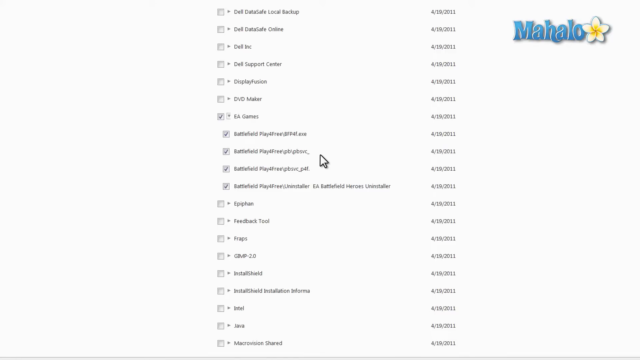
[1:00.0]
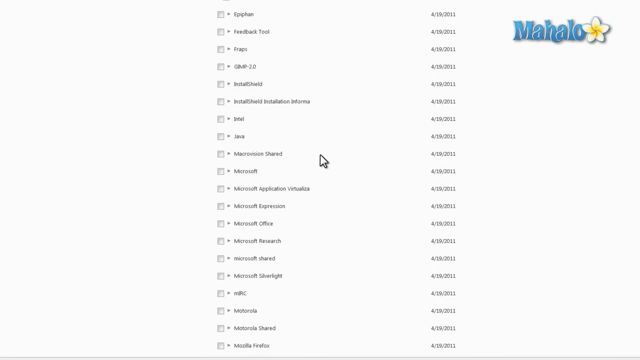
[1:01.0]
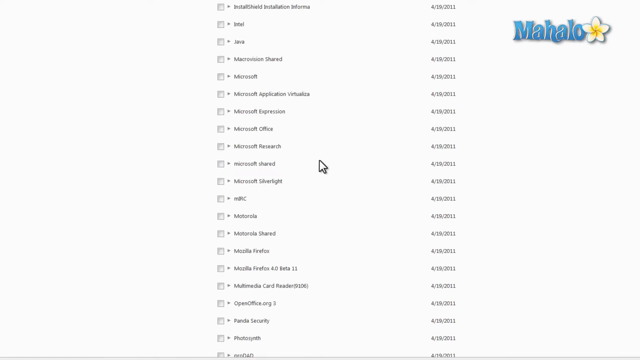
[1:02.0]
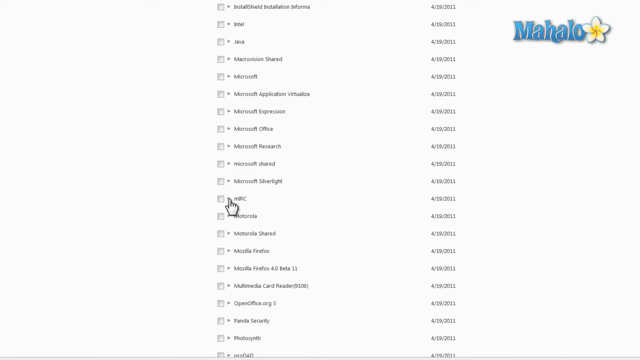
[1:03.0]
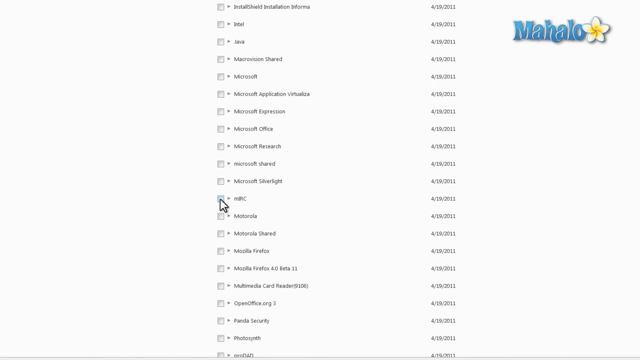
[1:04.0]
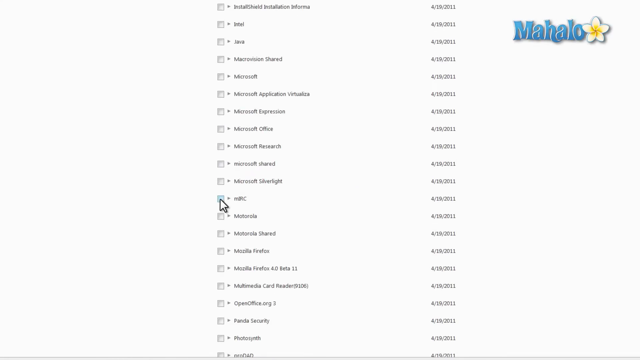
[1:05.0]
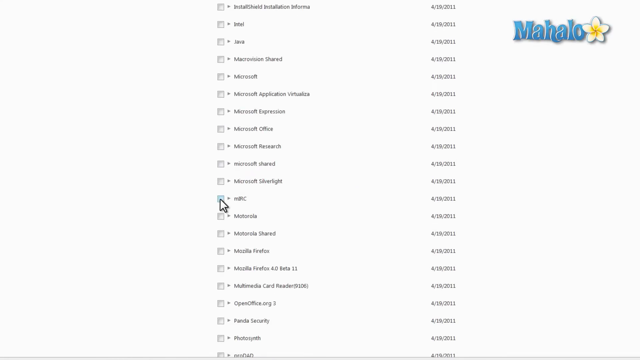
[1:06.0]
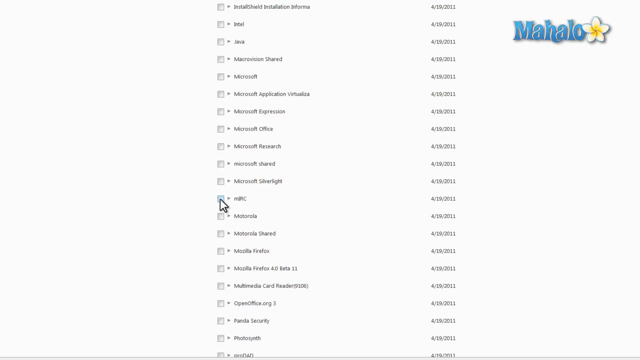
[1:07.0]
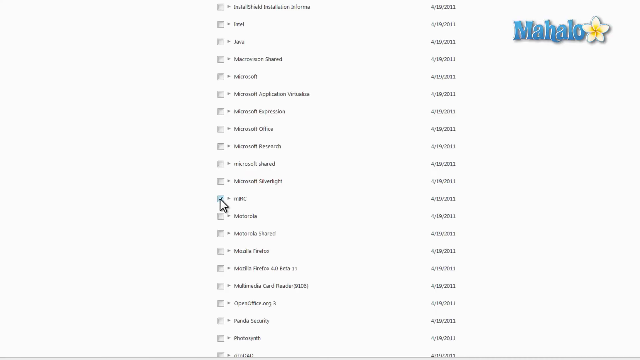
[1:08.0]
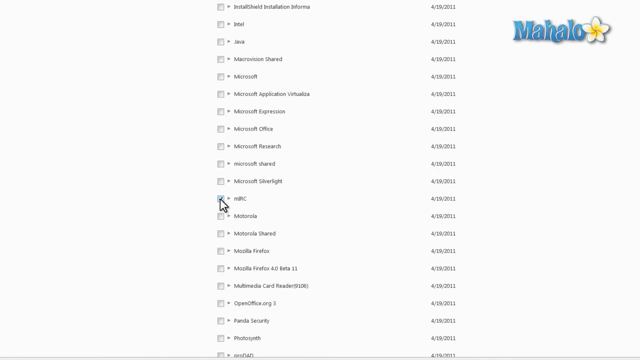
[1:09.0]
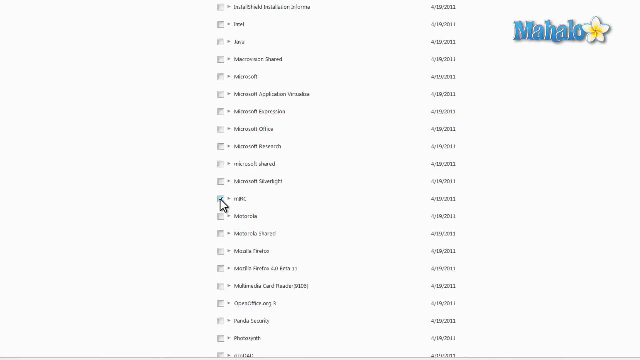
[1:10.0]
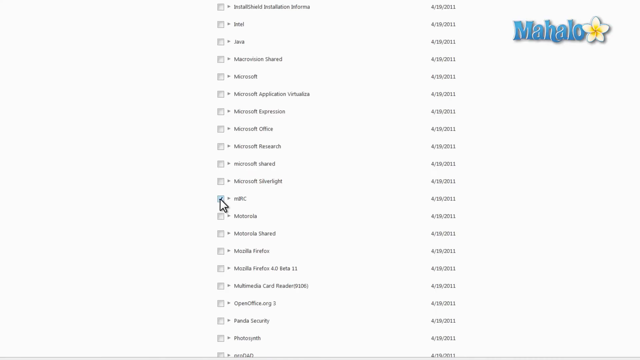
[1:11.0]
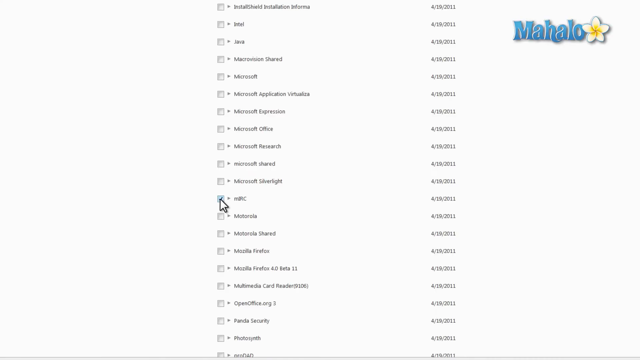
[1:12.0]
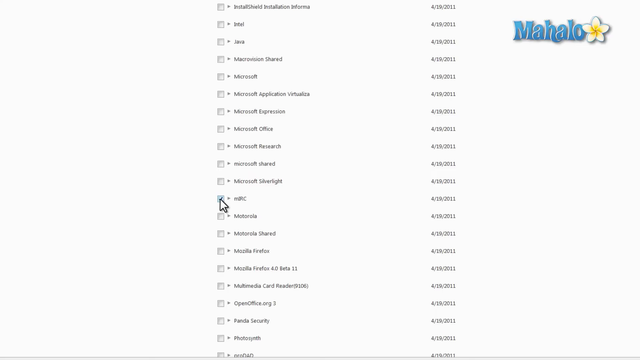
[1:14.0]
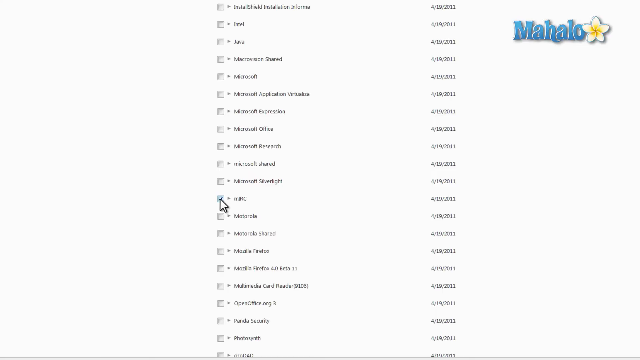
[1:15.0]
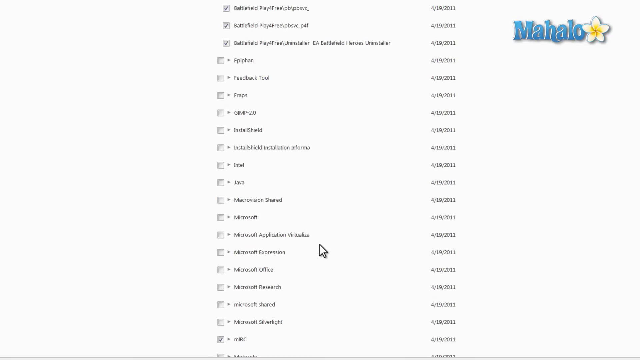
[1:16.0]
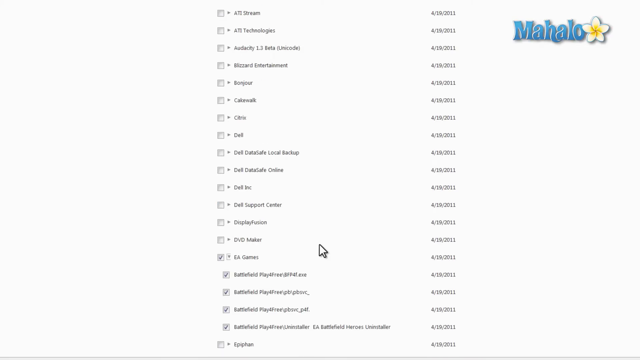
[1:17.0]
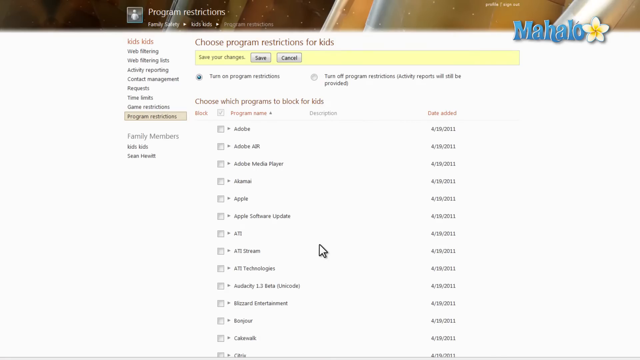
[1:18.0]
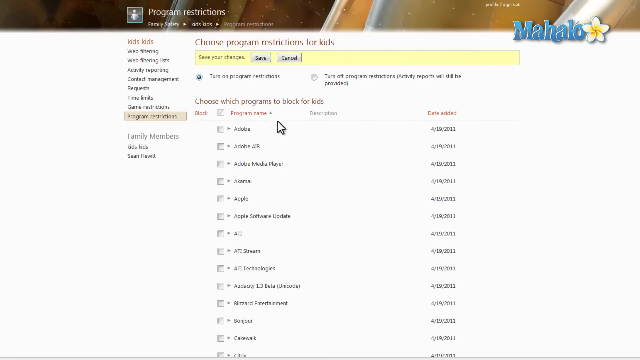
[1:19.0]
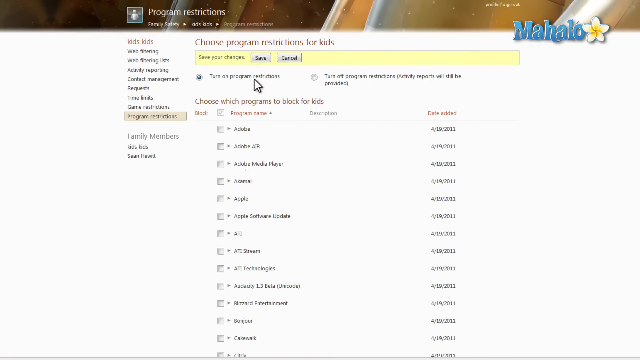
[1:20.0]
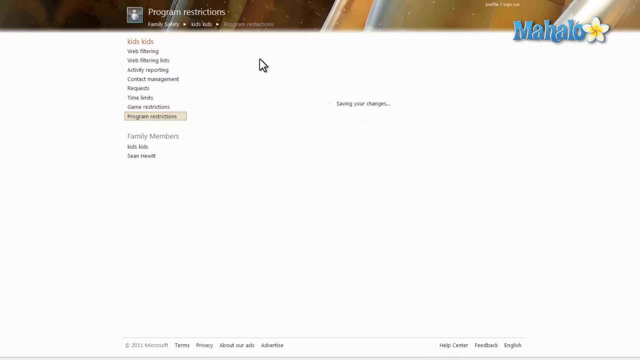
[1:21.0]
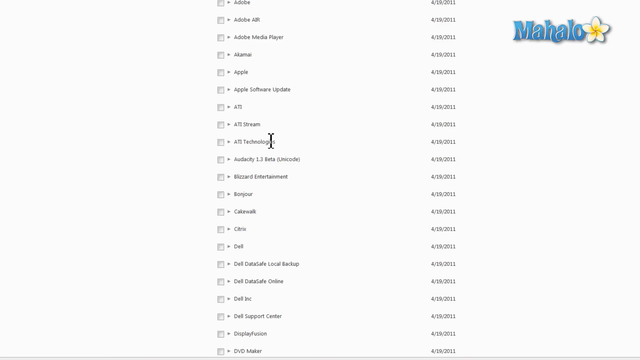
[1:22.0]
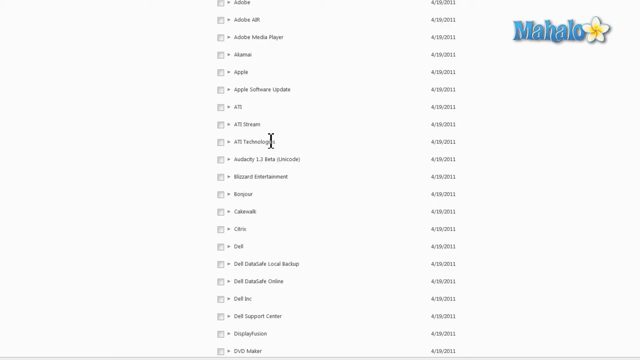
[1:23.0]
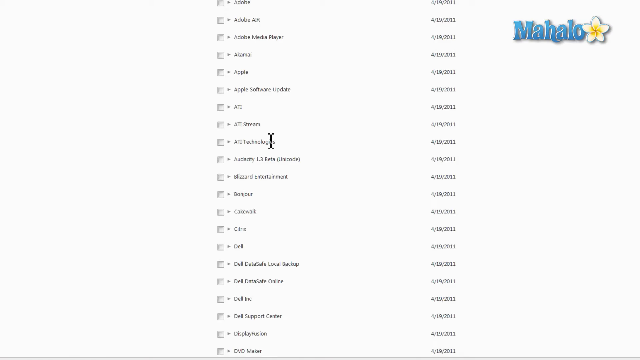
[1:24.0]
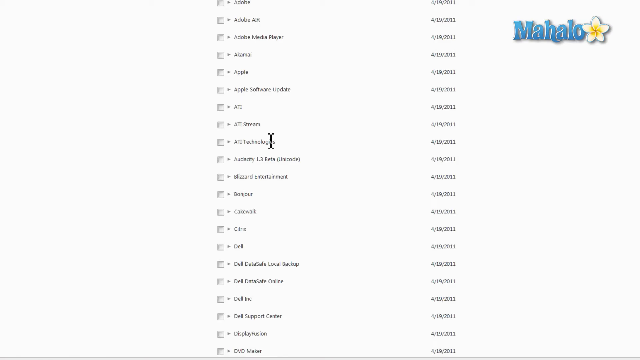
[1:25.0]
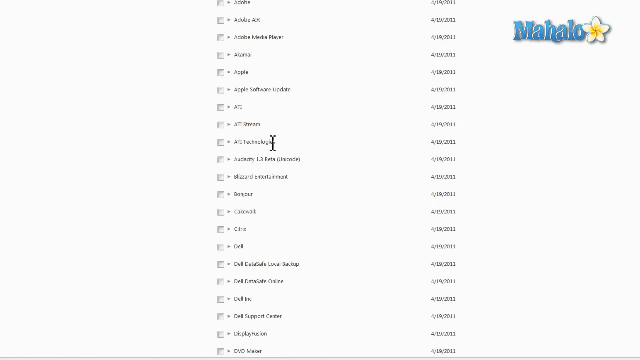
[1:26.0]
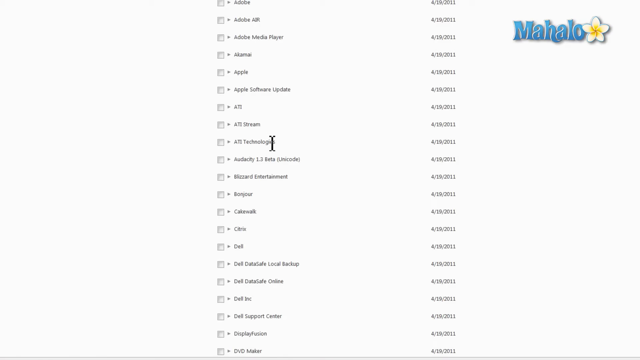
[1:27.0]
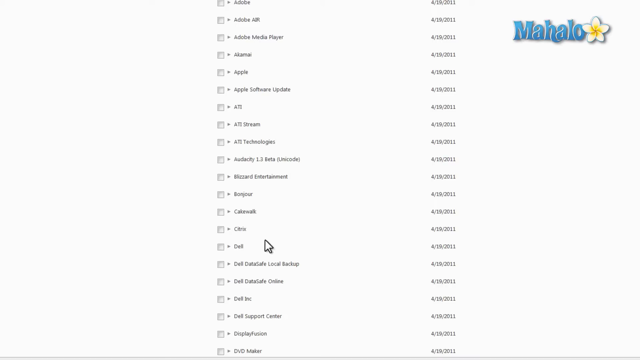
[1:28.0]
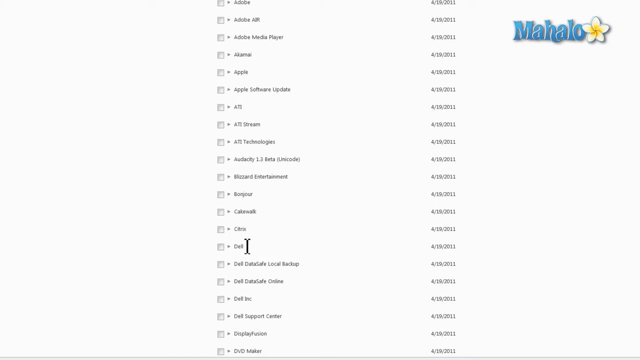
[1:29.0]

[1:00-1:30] After EA games is selected, the view goes down to an entry called AMC. It looks like a lowercase m followed by a capital M and C, though the middle letter is a bit blurry; since Microsoft is above it and Motor Play is after it, the middle letter is apparently something between I and O. There is no movement for a moment, likely while he is talking. He then scrolls back up to the top of the page over the save option and clicks it, and text reading "saving changes" appears. The view scrolls back down, and he moves his mouse over a couple of apps without clicking any of them. Throughout the video, the Mahalo logo is in the top right, followed by a white flower with five petals whose insides are yellow. Dates are shown for the apps, and it looks like basically all of them were made on April 19th, 2011.